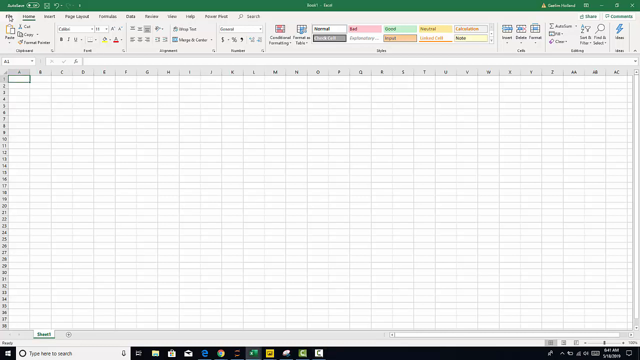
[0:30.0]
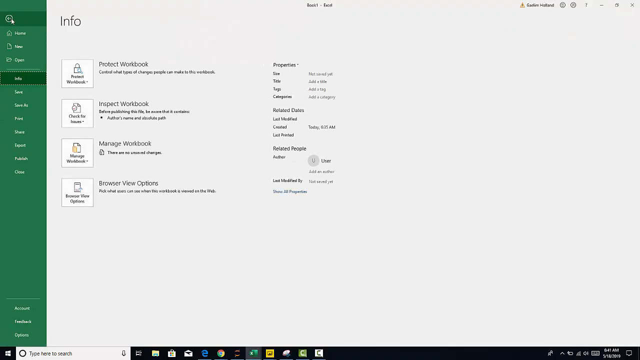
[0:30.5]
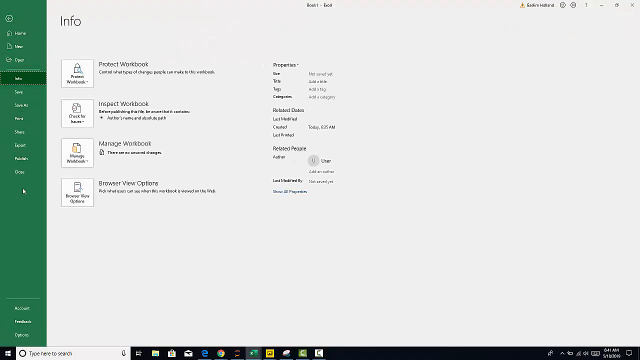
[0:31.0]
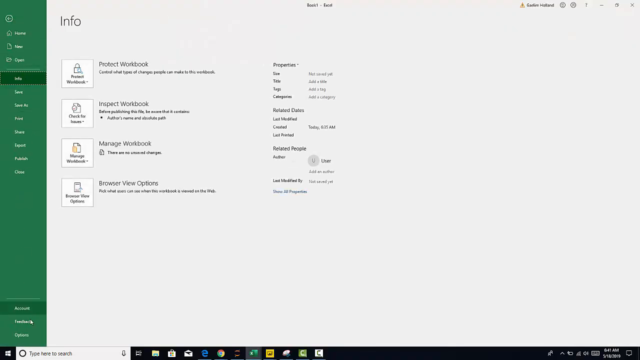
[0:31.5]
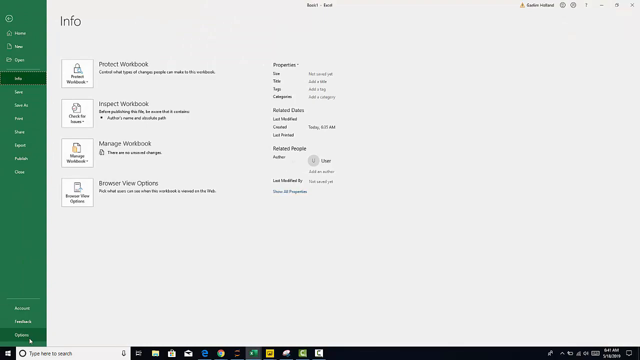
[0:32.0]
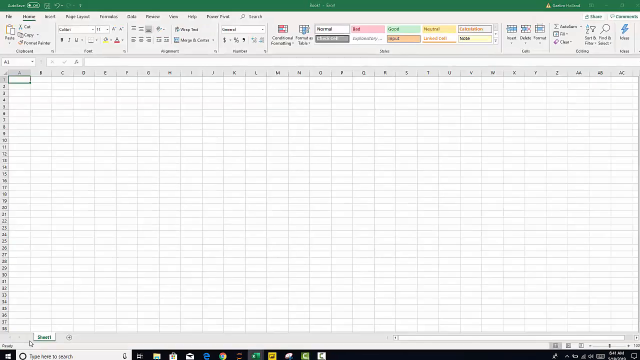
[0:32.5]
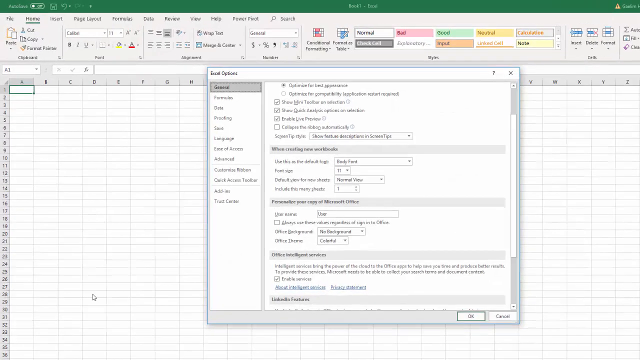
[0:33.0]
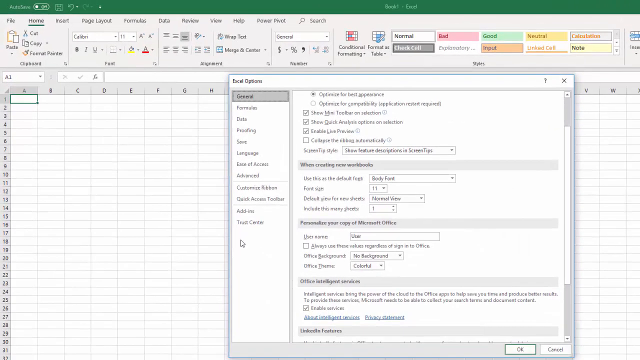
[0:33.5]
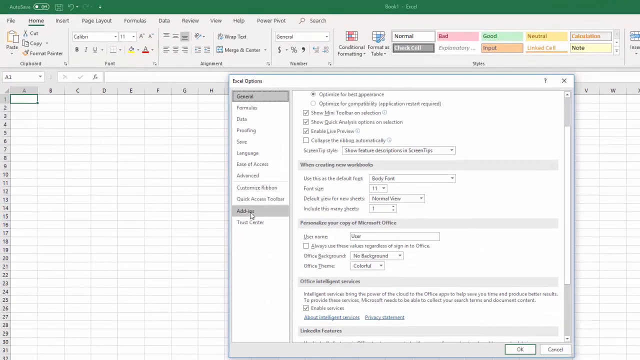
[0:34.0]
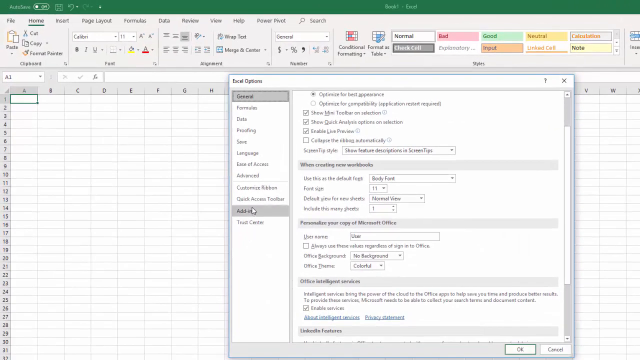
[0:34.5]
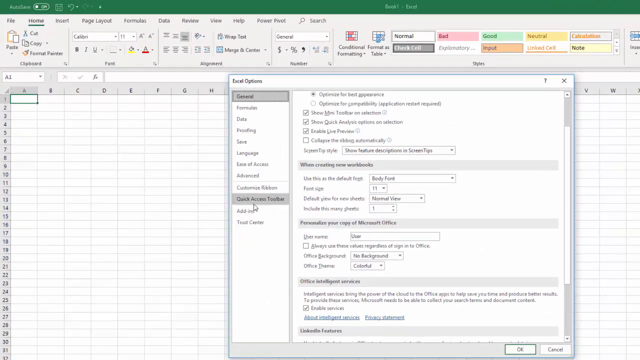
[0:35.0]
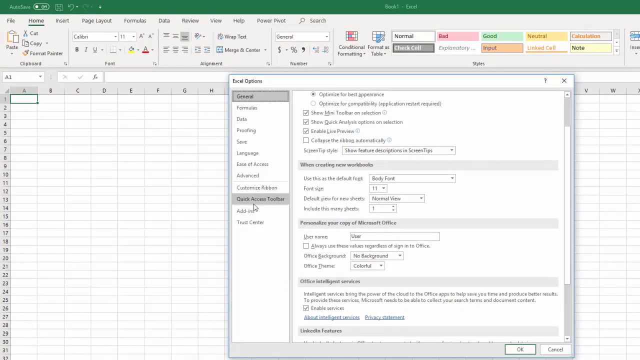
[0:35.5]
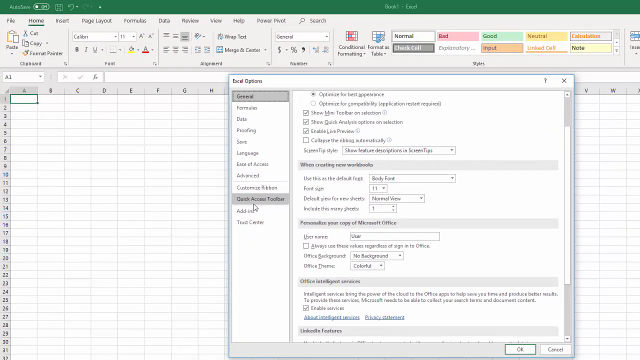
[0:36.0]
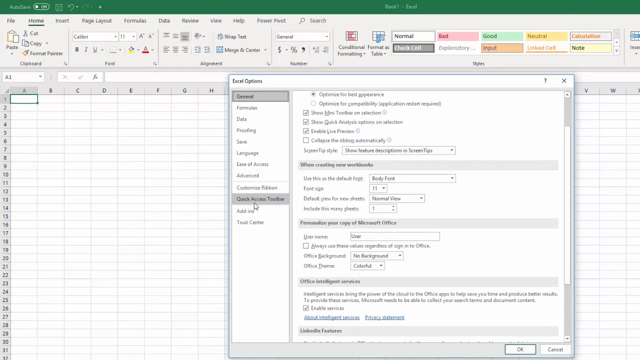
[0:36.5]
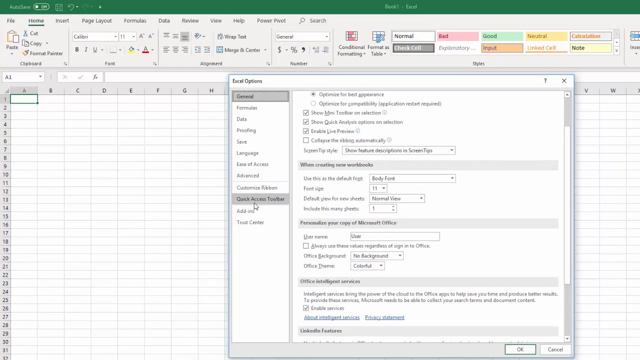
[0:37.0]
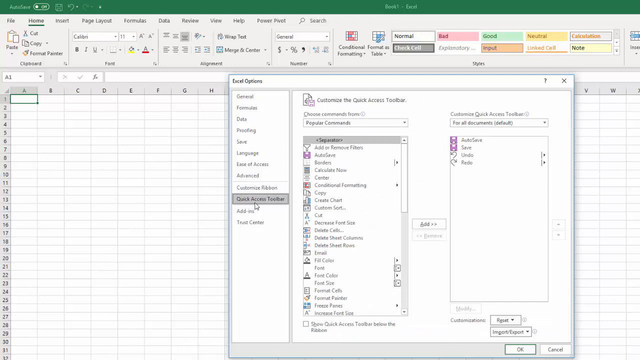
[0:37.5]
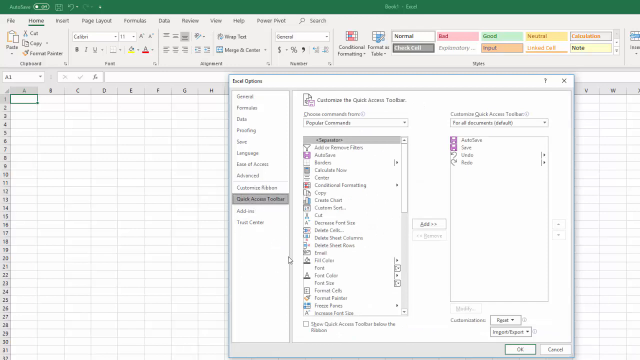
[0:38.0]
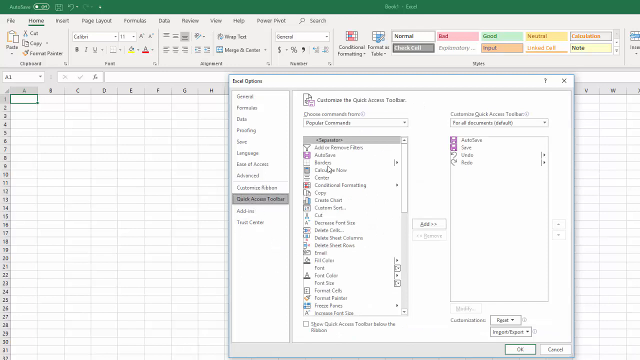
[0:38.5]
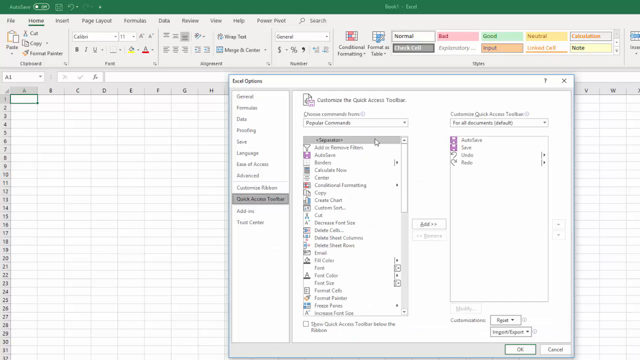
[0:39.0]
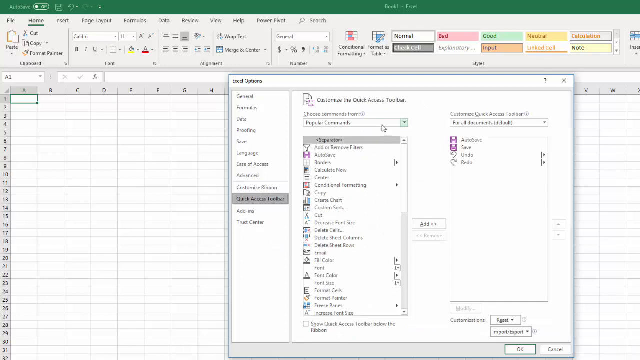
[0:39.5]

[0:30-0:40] The user opens the File menu and apparently scrolls down to Info, then clicks something at the bottom left, which is Options. Next they click Quick Access Toolbar and move toward some sort of command window, about to click on it.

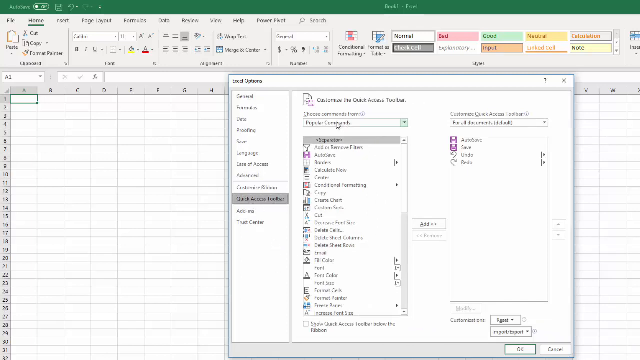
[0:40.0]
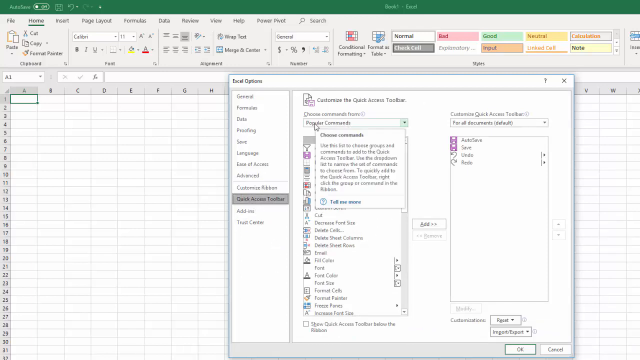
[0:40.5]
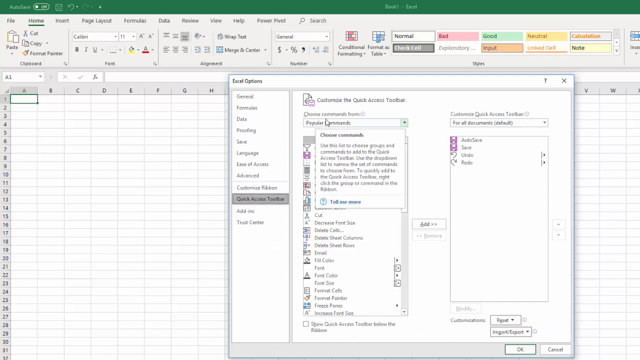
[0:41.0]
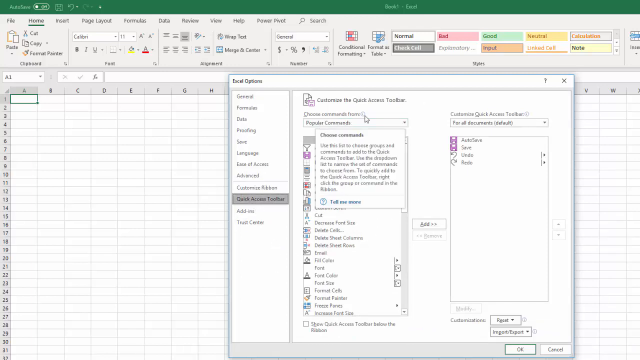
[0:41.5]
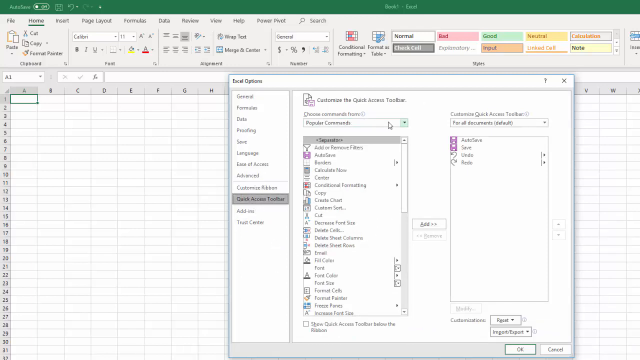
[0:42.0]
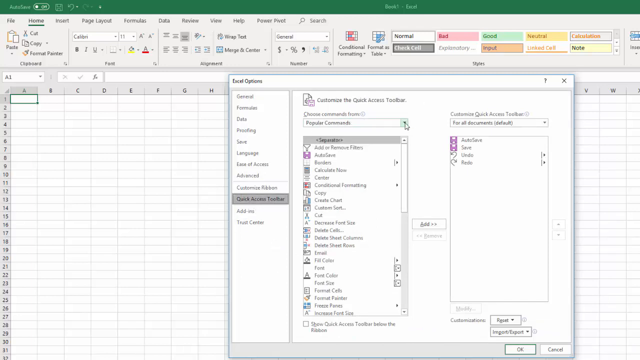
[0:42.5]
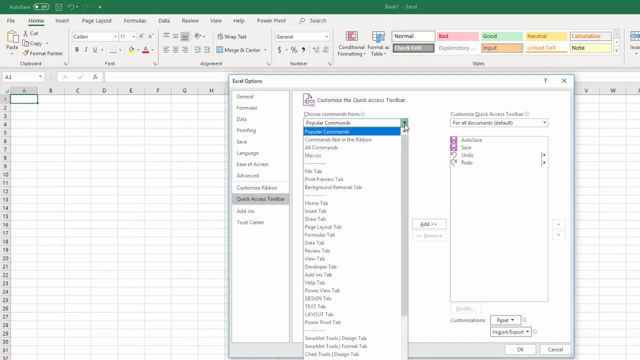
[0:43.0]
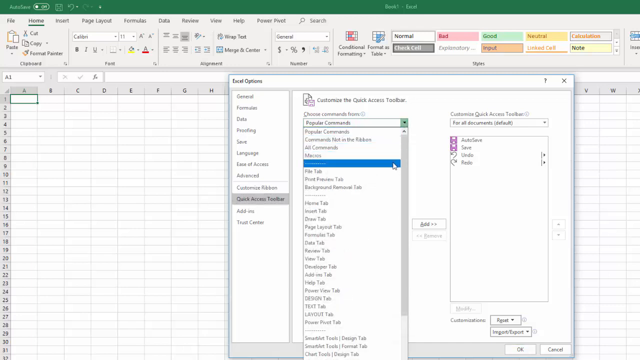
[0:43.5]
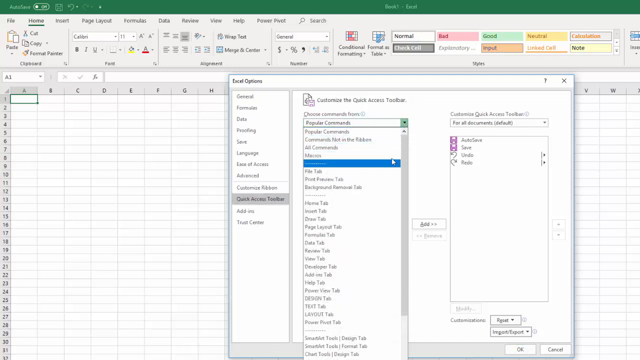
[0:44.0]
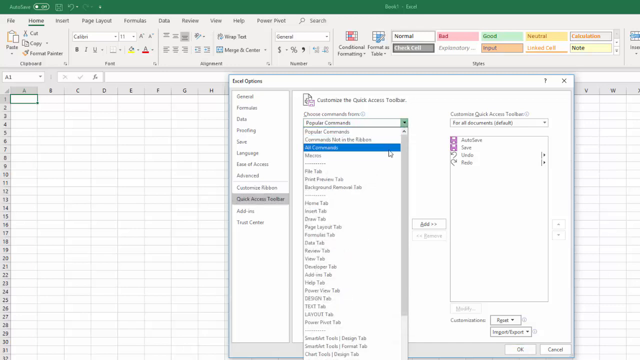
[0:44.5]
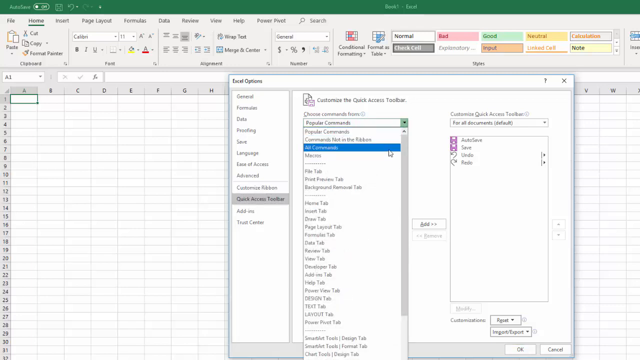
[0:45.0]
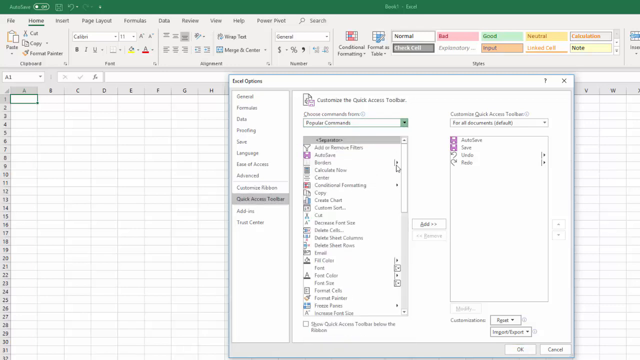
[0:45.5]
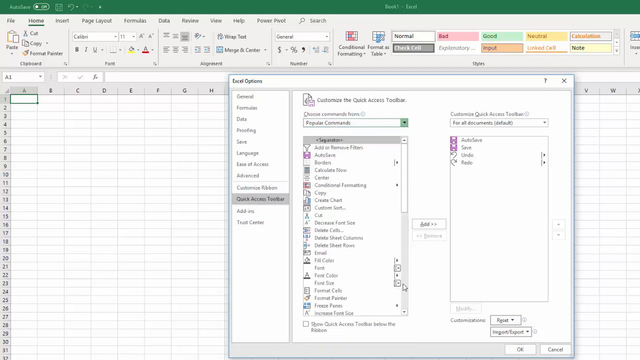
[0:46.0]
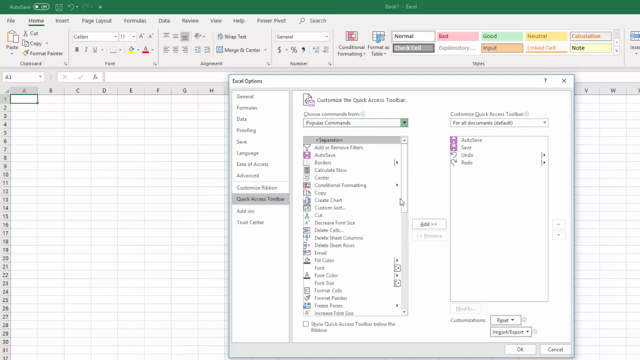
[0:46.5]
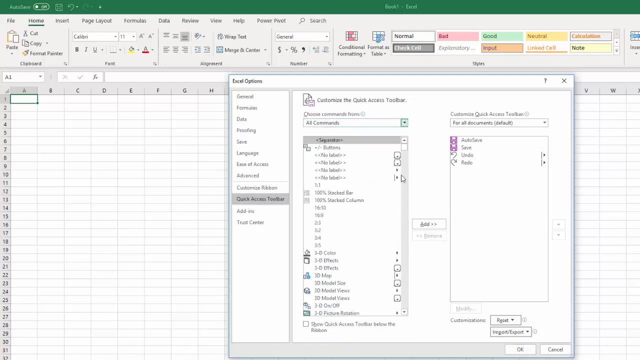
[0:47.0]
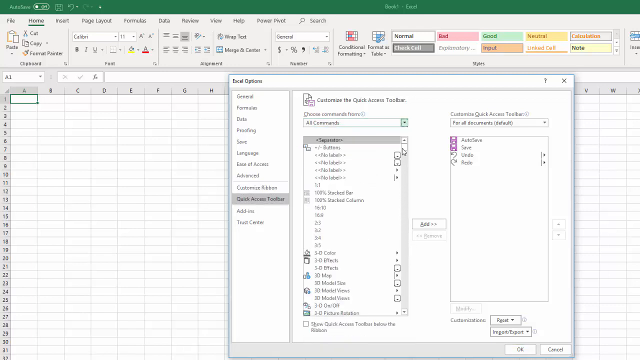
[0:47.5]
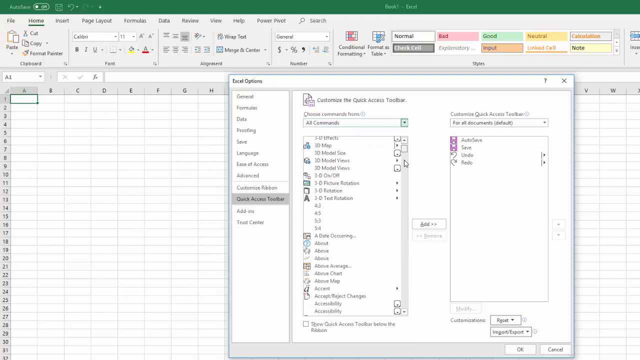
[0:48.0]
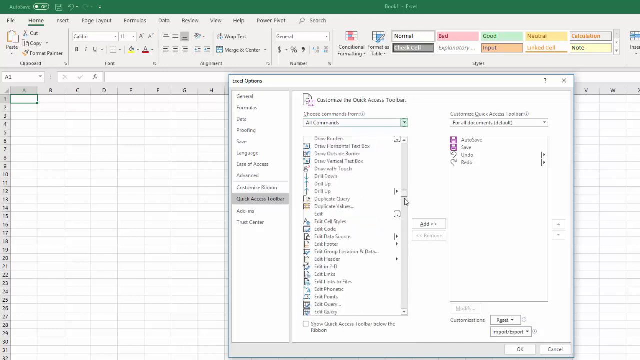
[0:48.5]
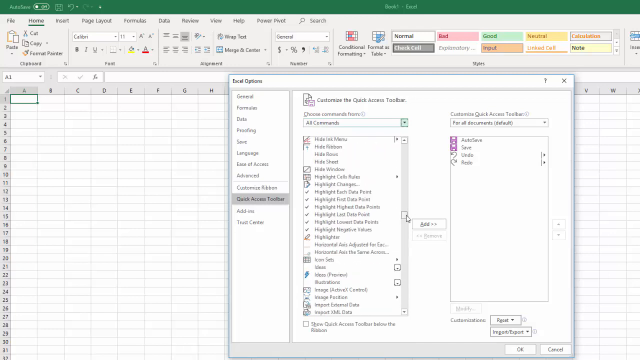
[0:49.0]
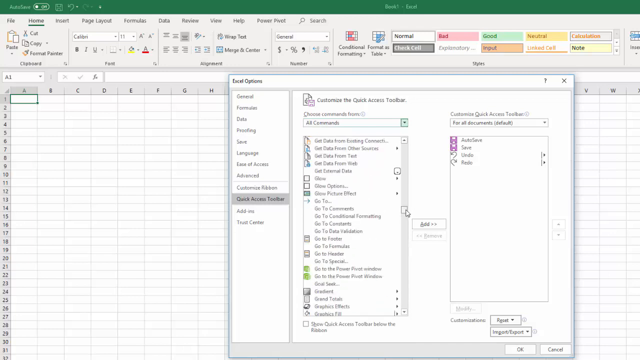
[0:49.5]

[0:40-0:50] The user continues working in the Excel options. They click a sort of dropdown menu that says "regular commands," then click what appears to say "all commands." The list loads and kind of switches to all commands. They then scroll down quickly, apparently looking for a specific command.